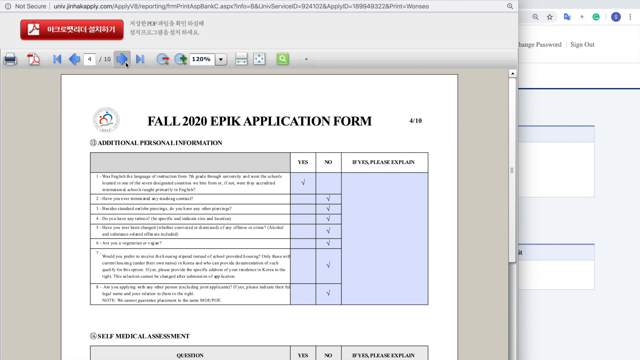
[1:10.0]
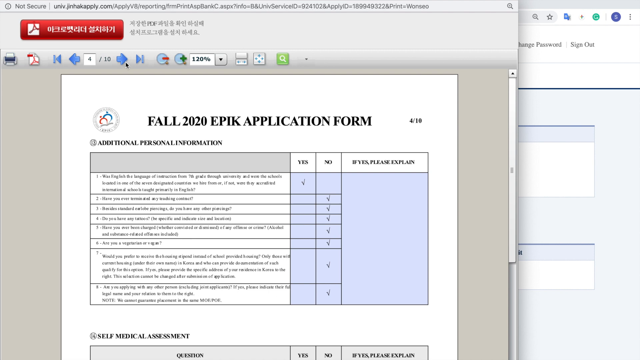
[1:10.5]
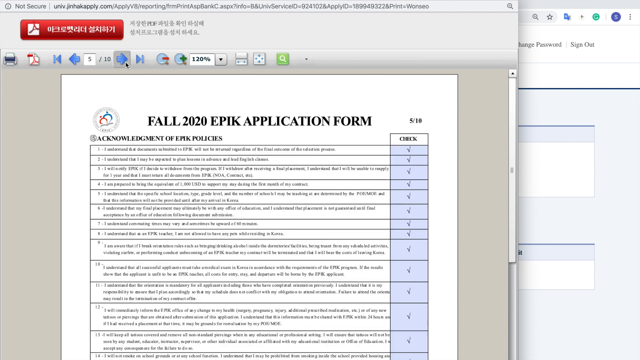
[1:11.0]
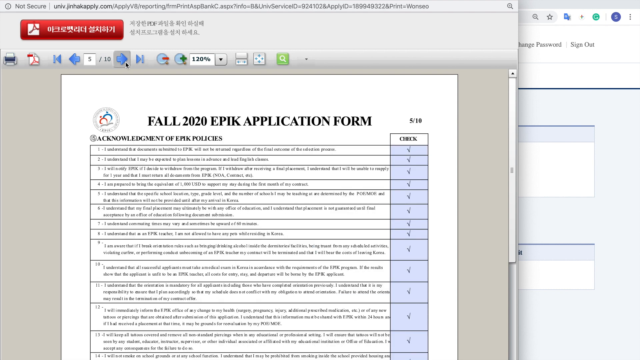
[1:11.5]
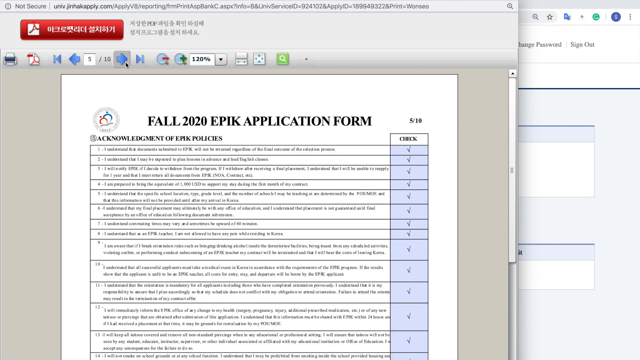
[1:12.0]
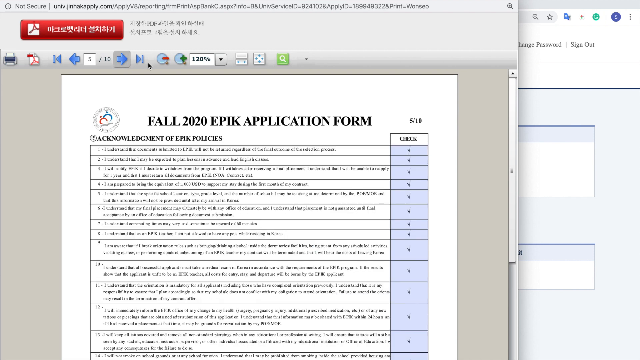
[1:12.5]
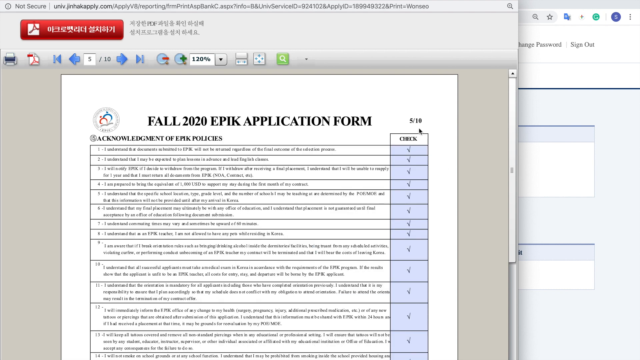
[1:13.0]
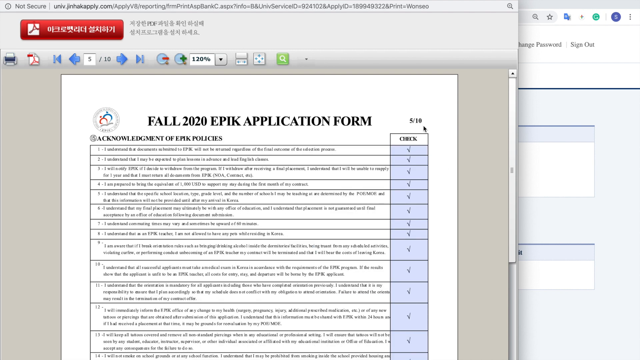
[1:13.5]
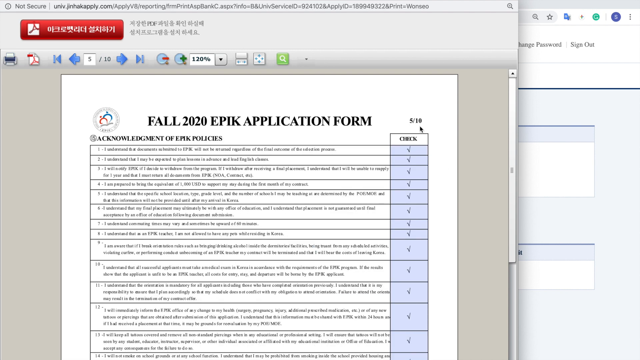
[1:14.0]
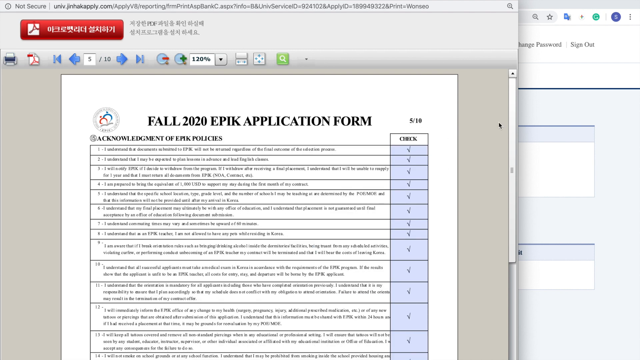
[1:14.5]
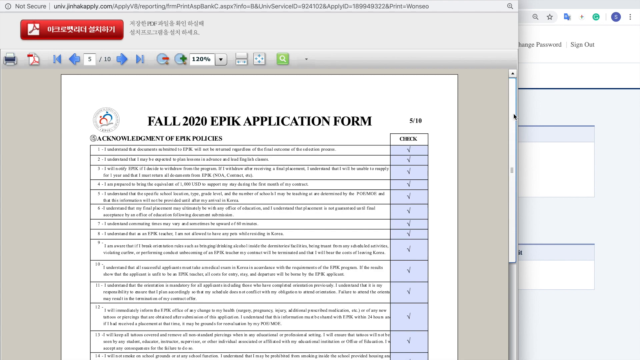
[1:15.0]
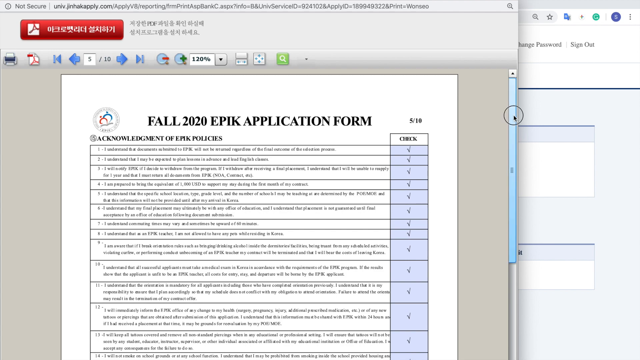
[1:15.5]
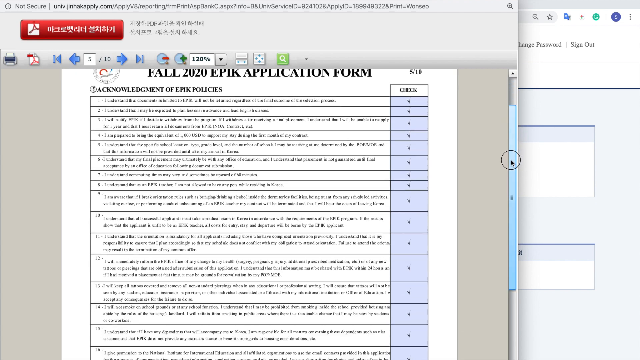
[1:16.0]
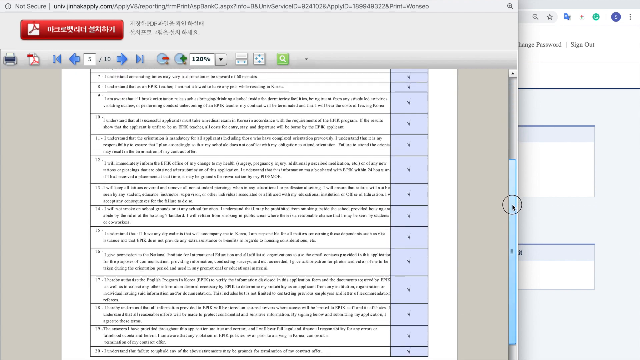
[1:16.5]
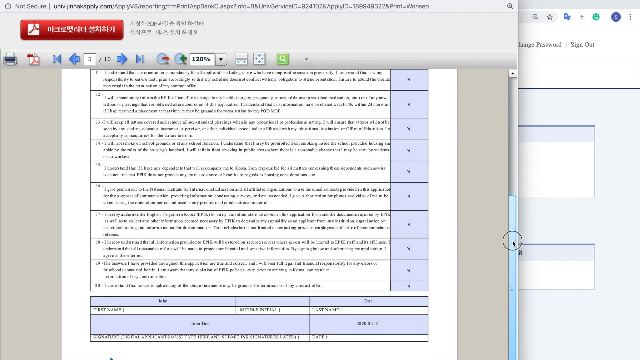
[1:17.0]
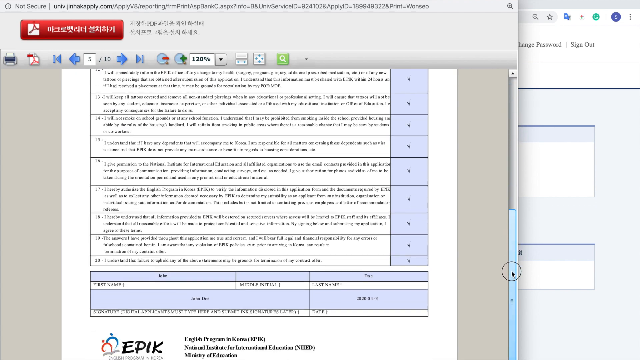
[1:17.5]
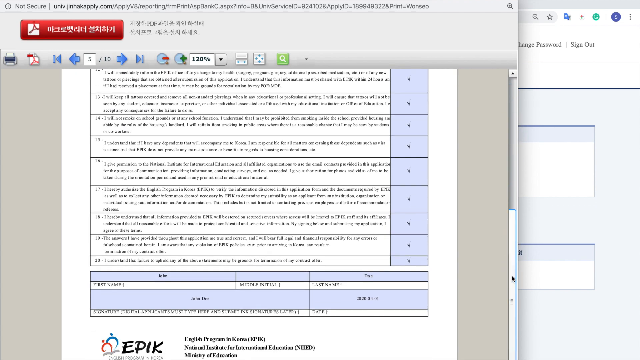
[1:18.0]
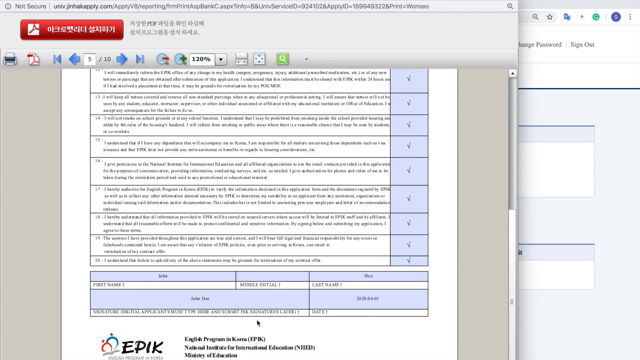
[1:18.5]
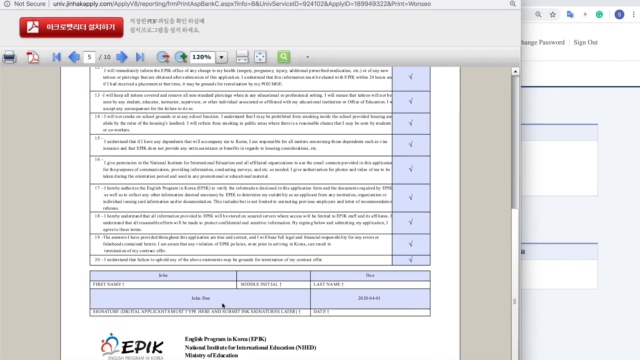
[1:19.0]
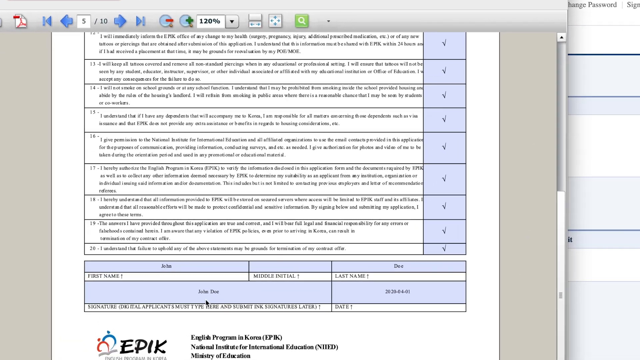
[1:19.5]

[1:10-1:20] The EPIK Fall 2020 Online Application for Guest English Teacher Recruitment is at the Acknowledgement of EPIK Policies section. There are many fields, numbered 1 through 20, and the person has checked all of them. At the bottom is a place for a name, middle initial, last name and date, acknowledging agreement. The section also has a page two.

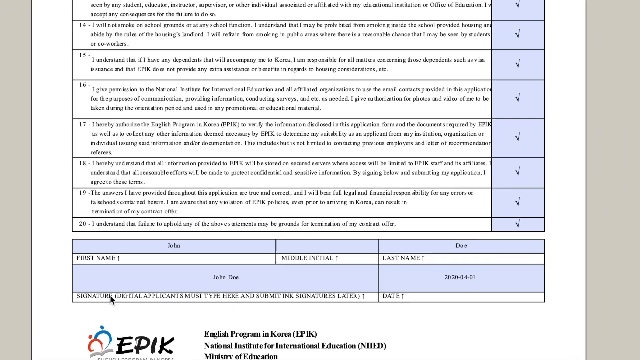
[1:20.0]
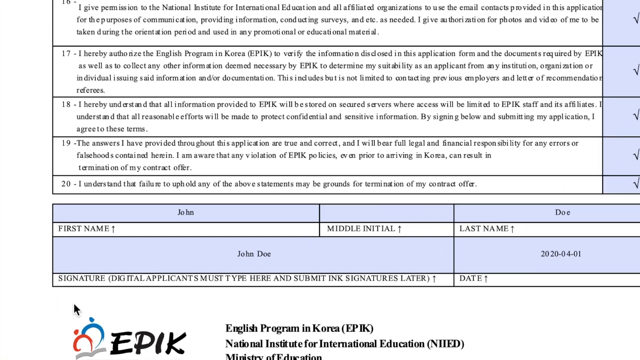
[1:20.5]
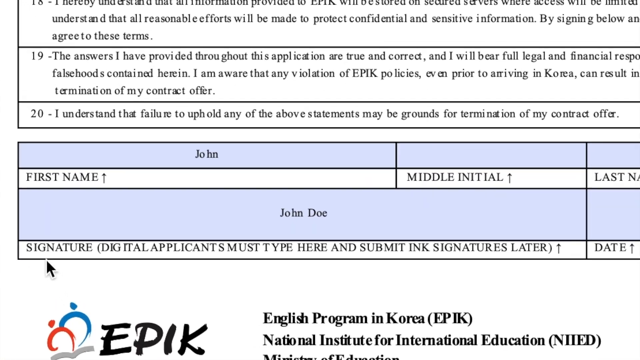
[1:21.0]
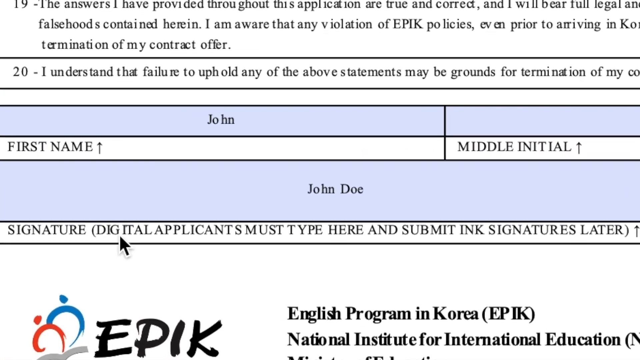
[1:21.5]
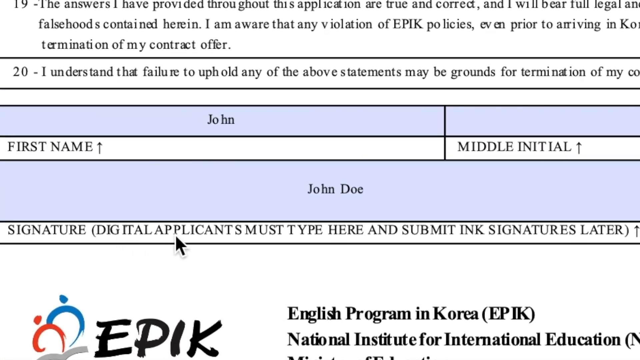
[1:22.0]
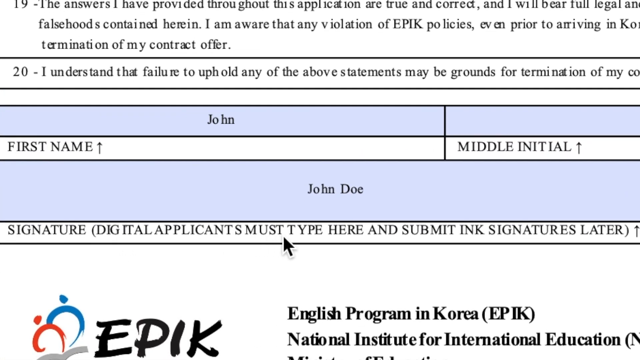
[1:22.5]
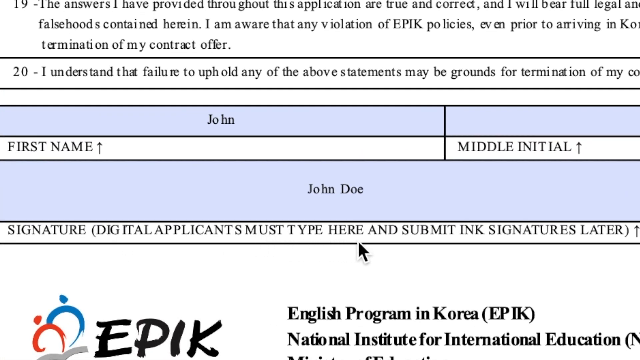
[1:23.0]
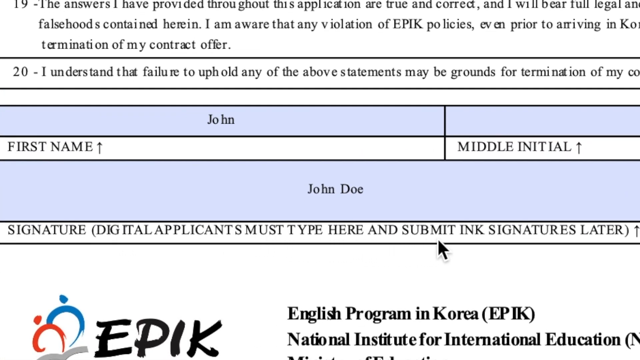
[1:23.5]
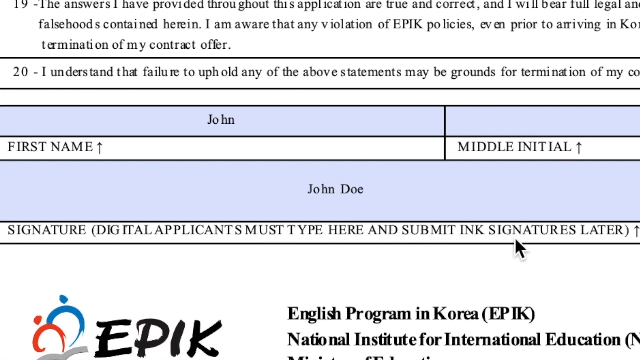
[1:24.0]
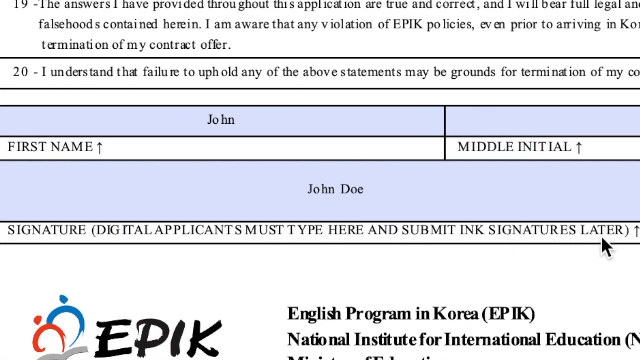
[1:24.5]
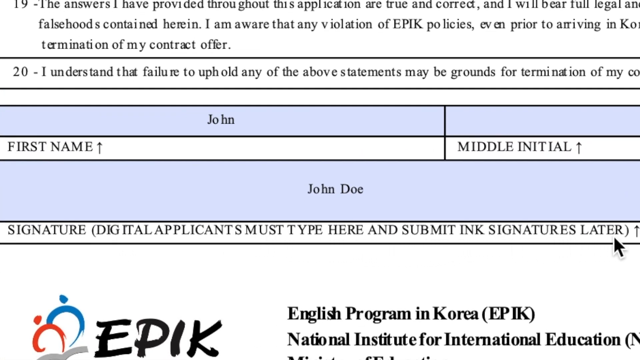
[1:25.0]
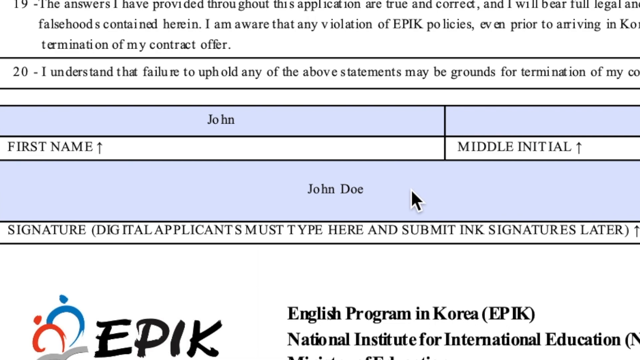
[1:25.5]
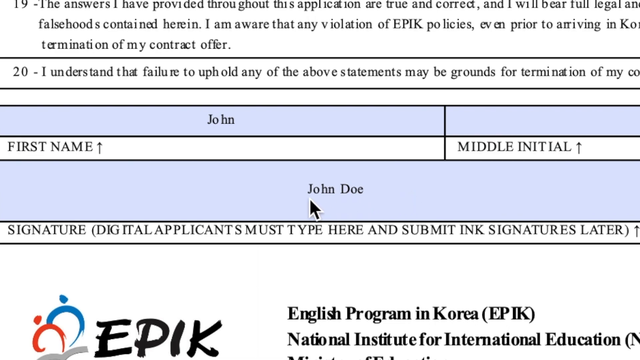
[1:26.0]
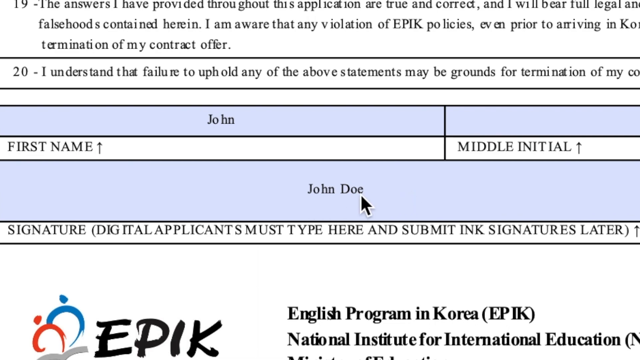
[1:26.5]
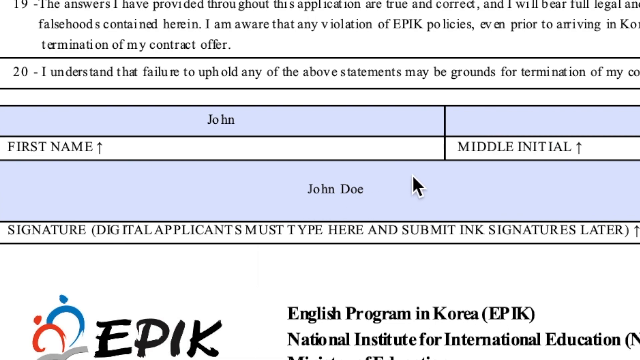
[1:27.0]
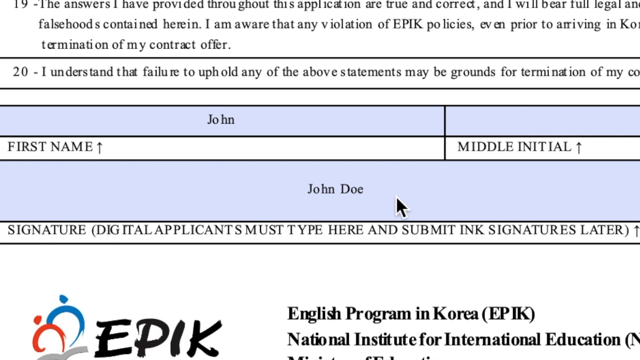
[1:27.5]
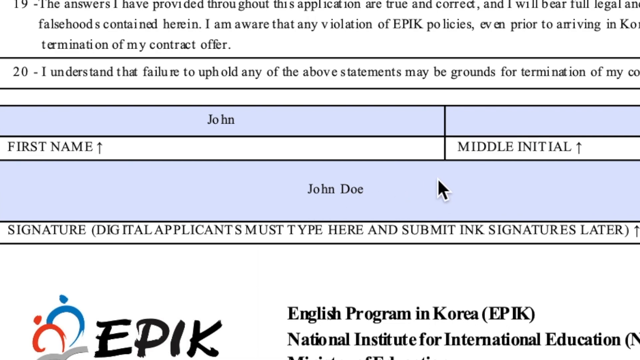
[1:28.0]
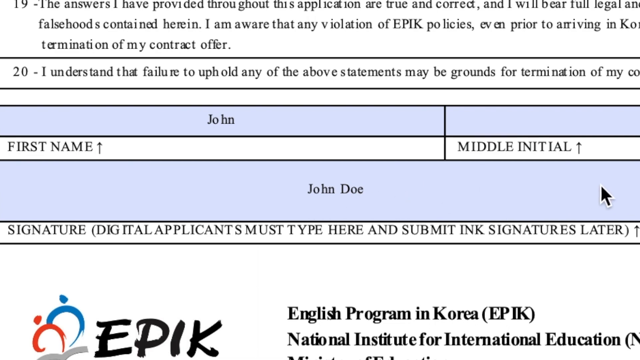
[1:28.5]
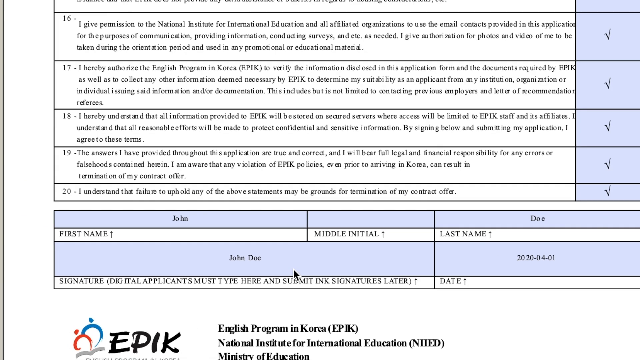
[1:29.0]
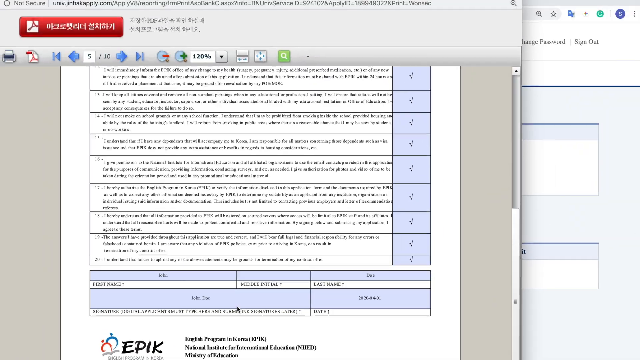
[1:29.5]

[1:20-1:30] On the EPIK Fall 2020 online application for the guest English teacher recruiting position, someone is filling out the fields, checking all the requirements numbered 1 through 20 and signing at the bottom, which they have done.